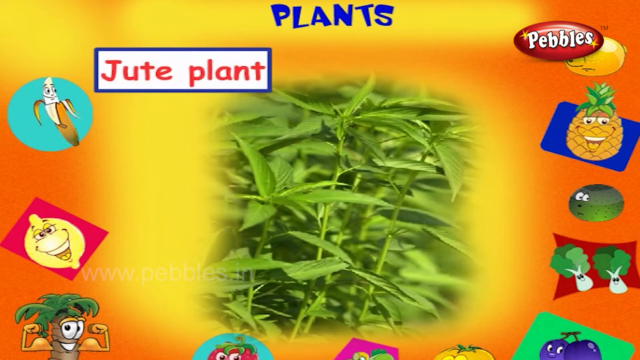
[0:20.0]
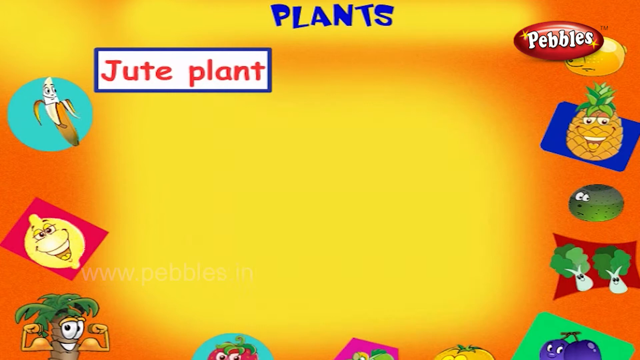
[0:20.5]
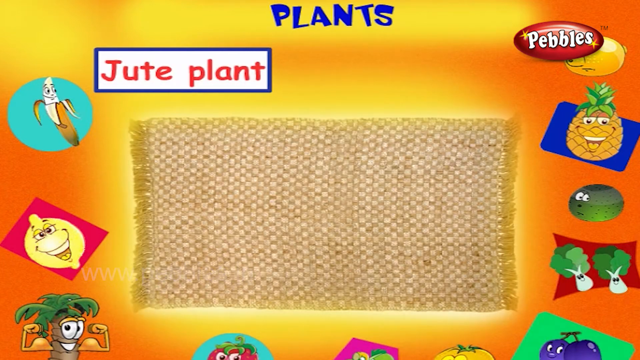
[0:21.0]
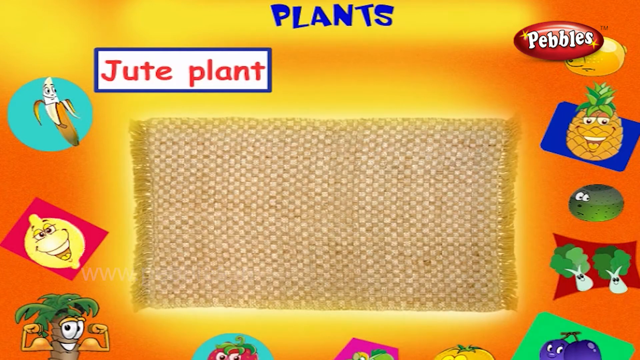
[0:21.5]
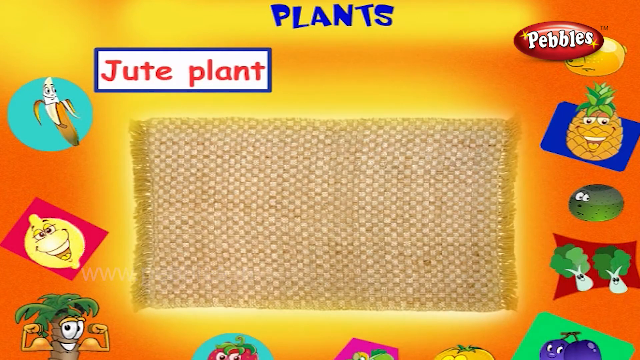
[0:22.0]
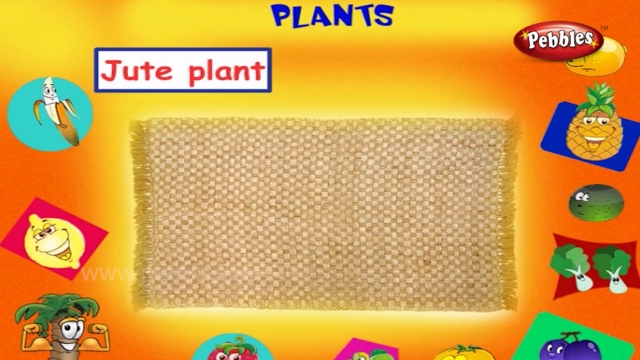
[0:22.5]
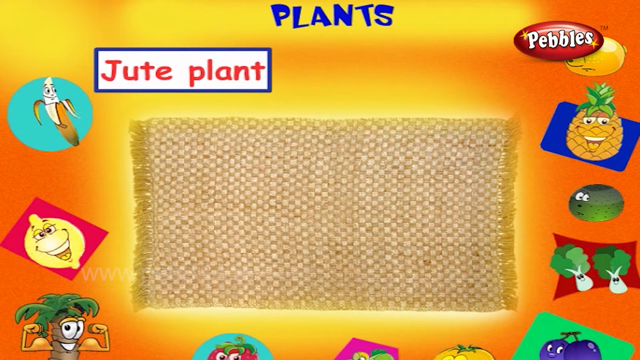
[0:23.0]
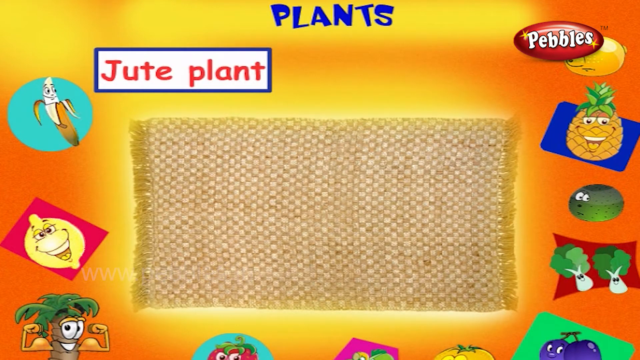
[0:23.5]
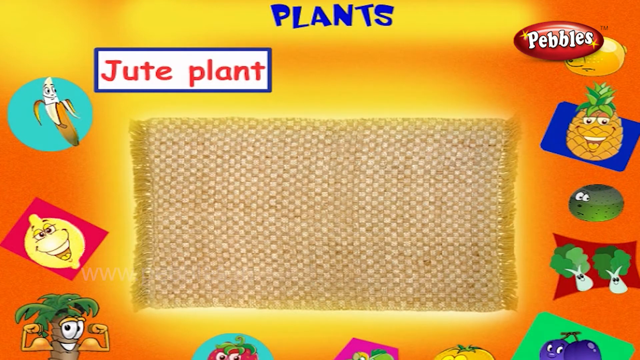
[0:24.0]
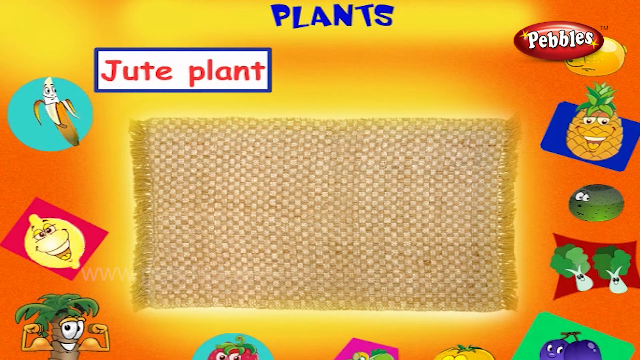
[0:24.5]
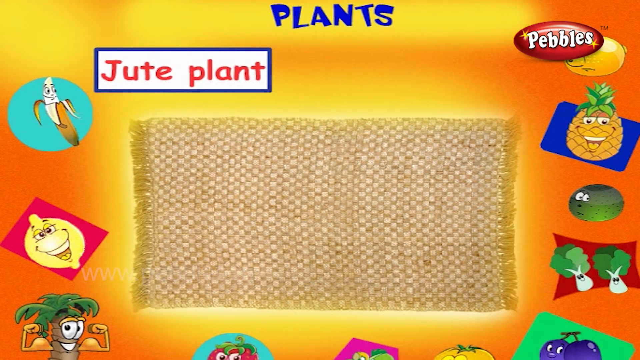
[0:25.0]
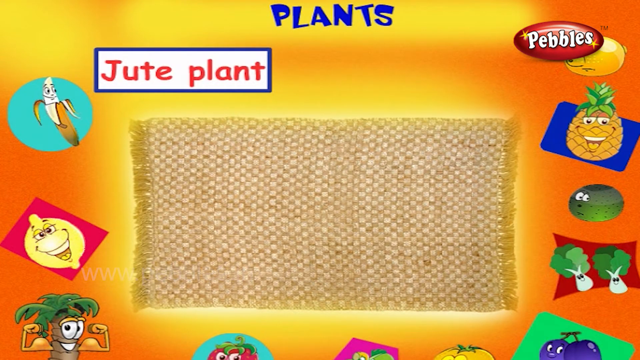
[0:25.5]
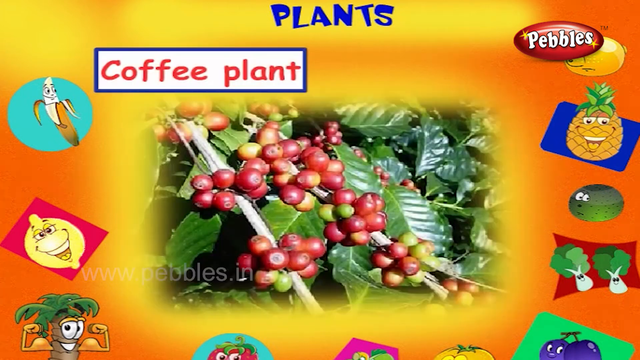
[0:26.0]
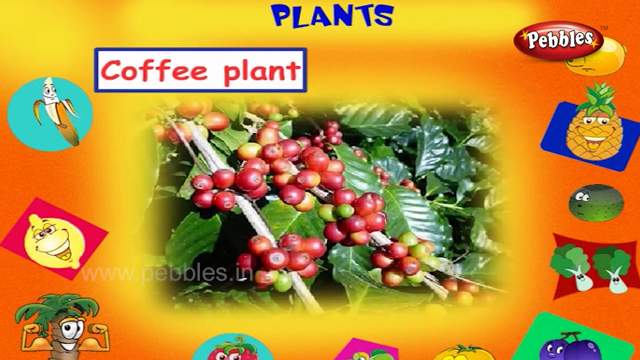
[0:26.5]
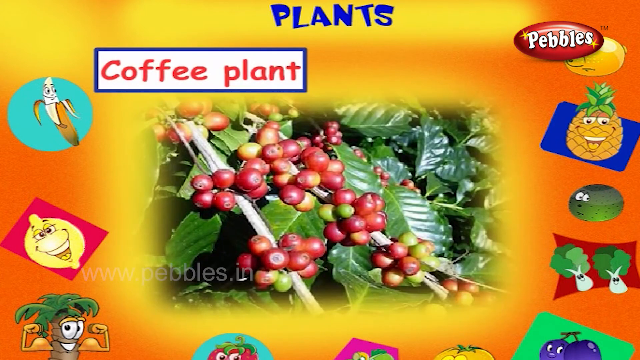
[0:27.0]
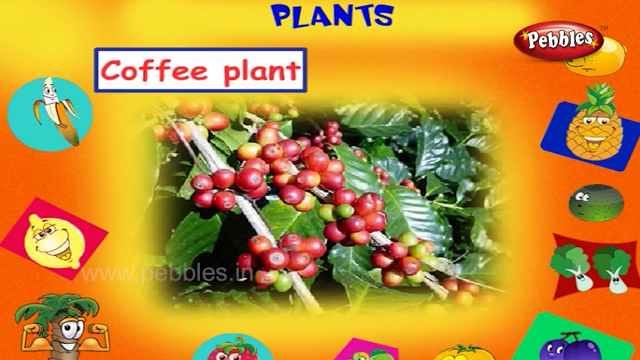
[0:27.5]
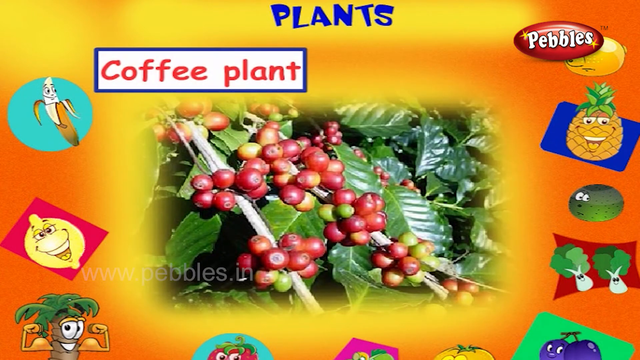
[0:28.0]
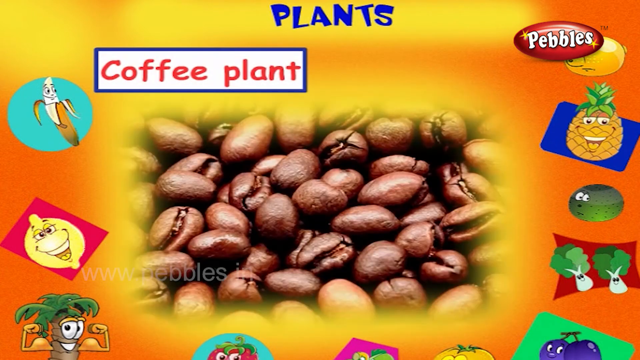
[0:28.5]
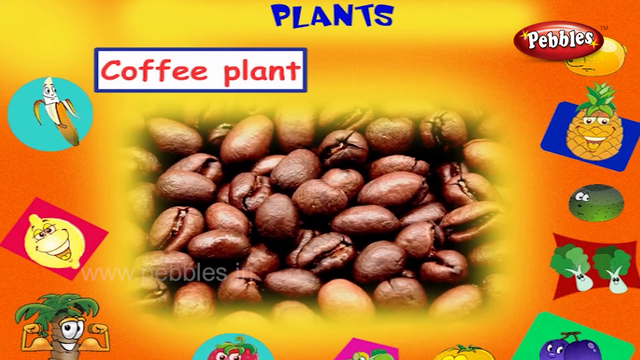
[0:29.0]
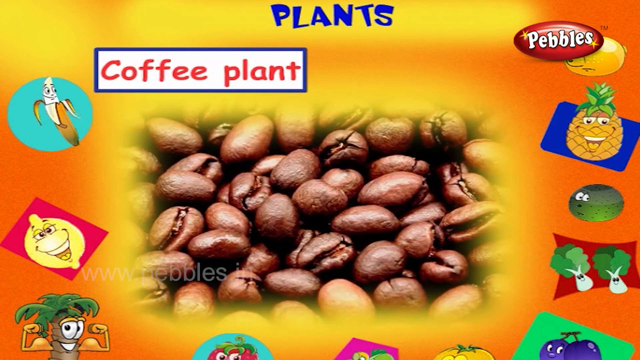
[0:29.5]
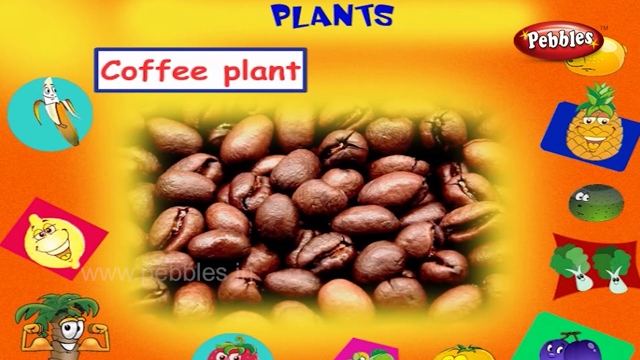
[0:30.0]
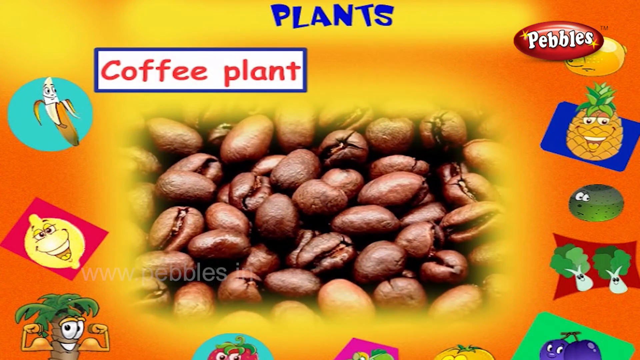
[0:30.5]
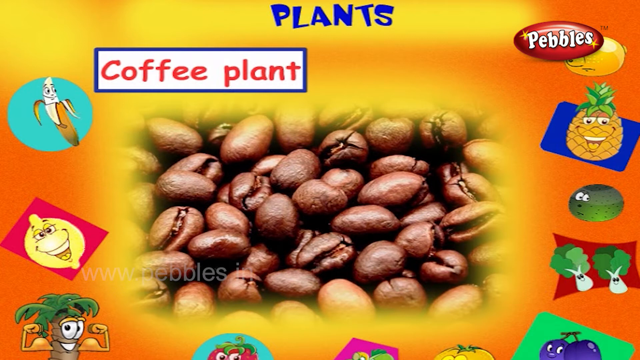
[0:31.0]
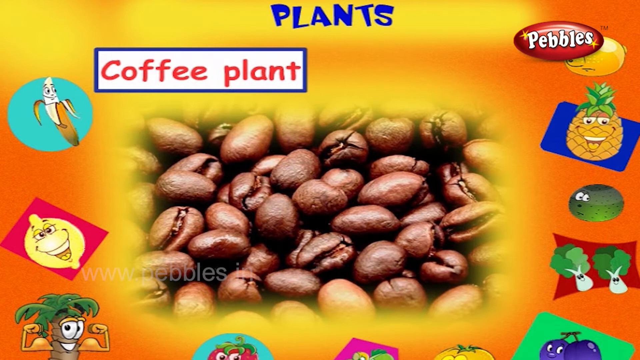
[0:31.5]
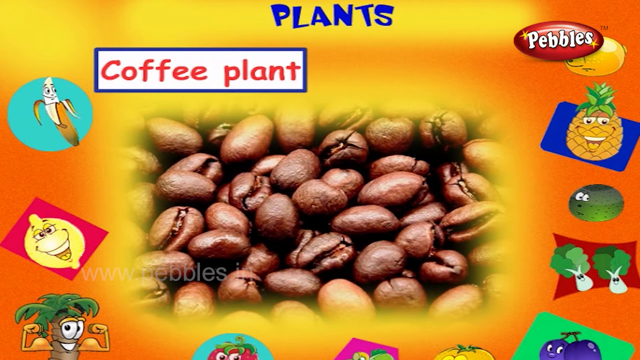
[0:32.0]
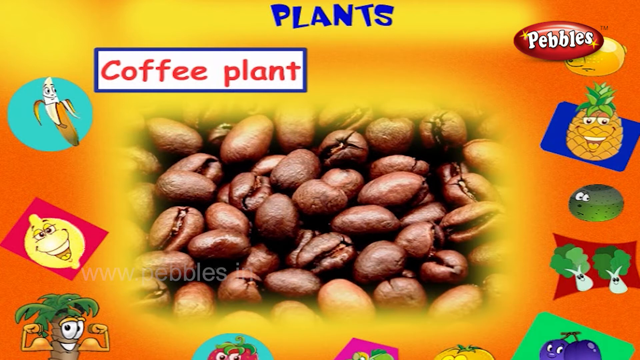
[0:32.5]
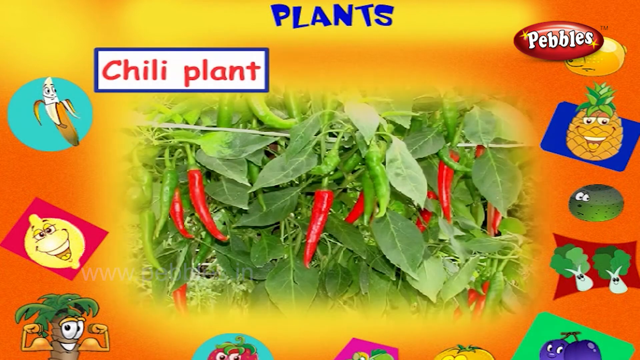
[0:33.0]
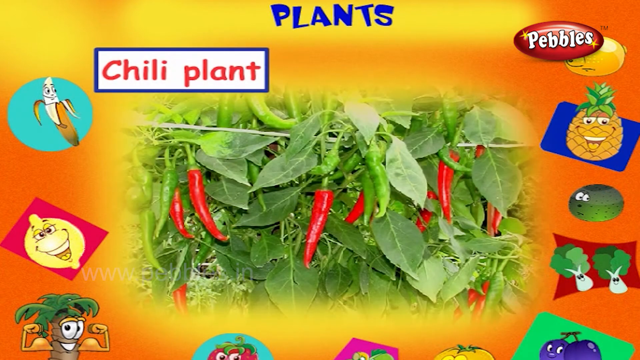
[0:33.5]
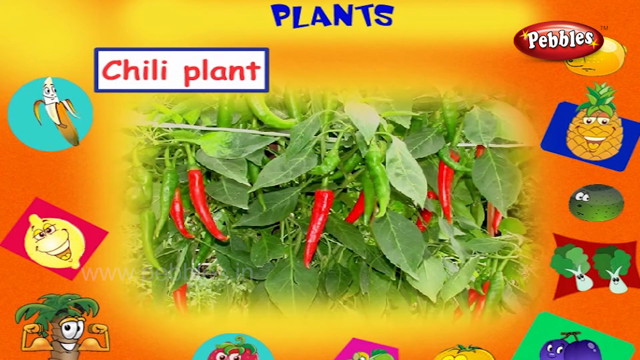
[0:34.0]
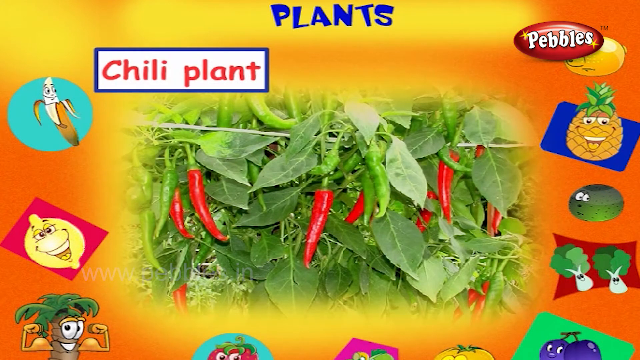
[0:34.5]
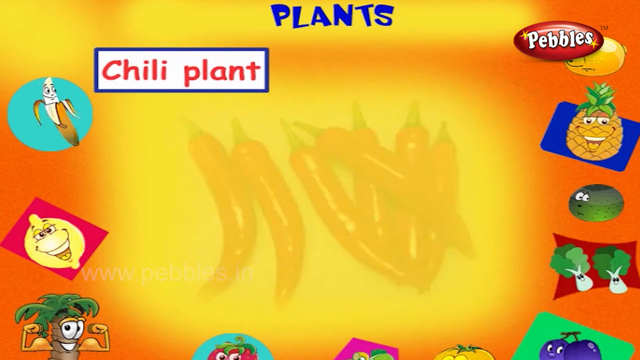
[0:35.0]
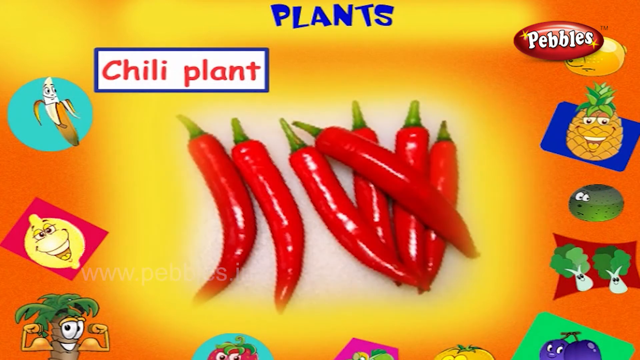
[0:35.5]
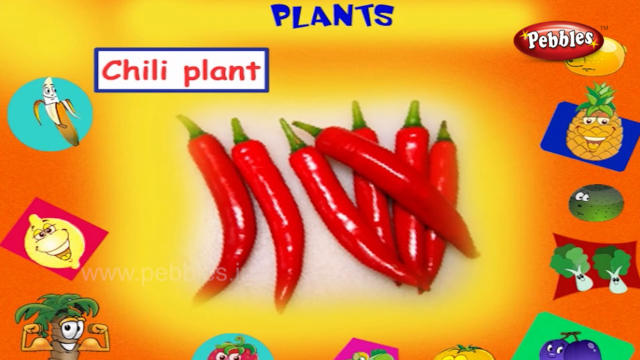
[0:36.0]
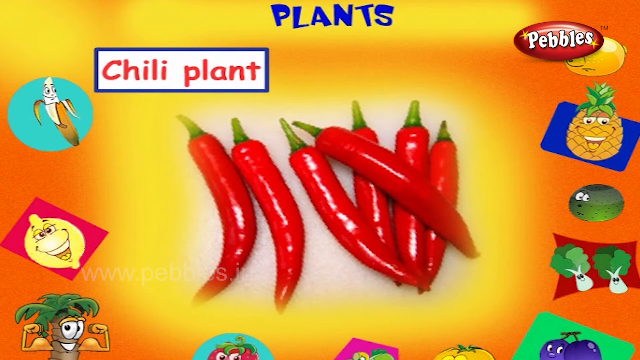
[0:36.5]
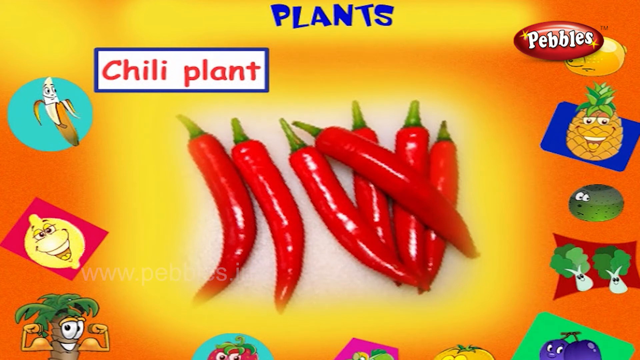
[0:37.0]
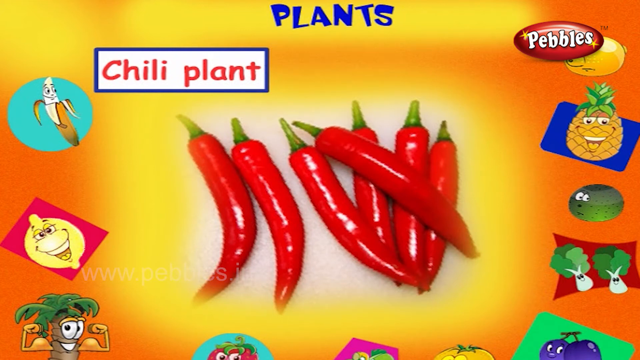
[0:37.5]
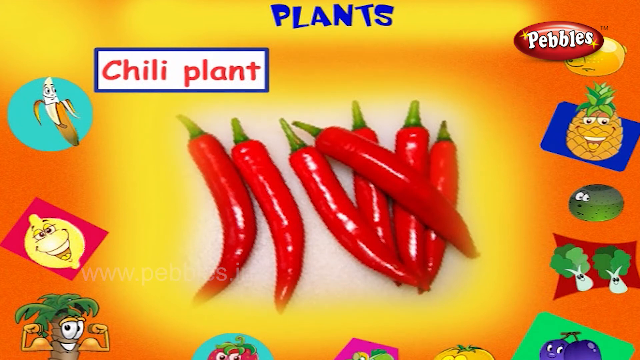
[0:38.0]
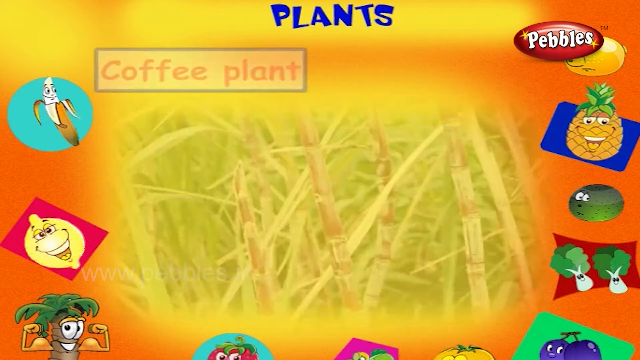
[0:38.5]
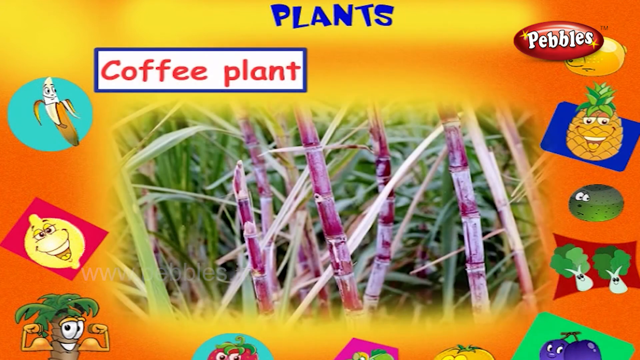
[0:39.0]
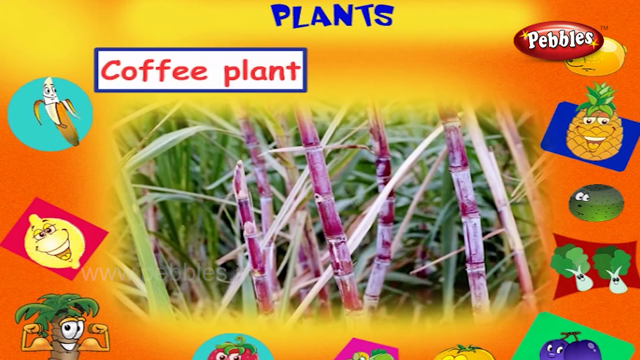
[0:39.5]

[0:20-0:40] Slides of different plants are shown, including chili plants and coffee plants. One slide shows a green plant, and another shows what it is used for, making a mat, and the mat is displayed. A coffee plant is shown, followed by its end product, coffee, or the fruits from the coffee plant. A chili plant is then shown, followed by its end product, chili. The slides pair each plant with its end product.